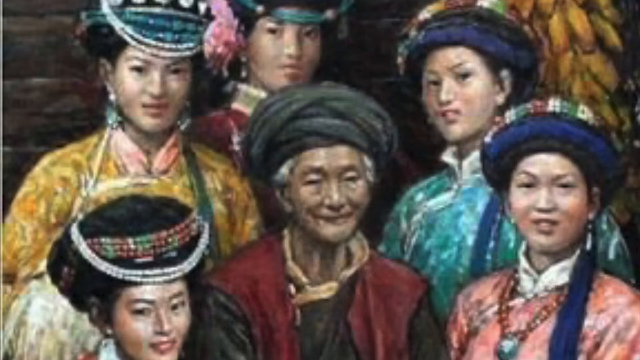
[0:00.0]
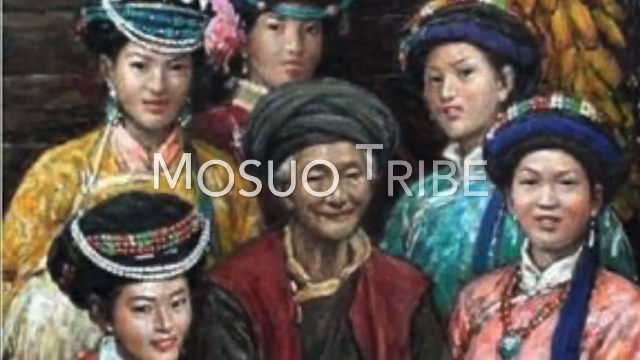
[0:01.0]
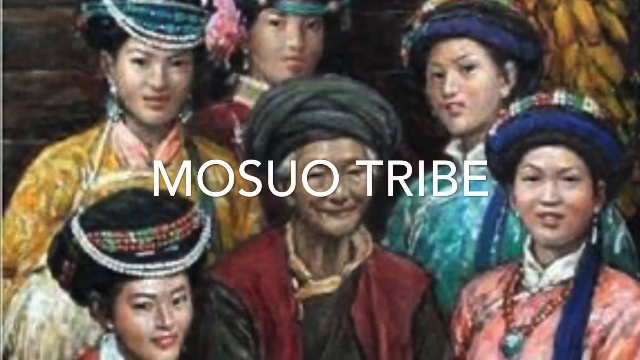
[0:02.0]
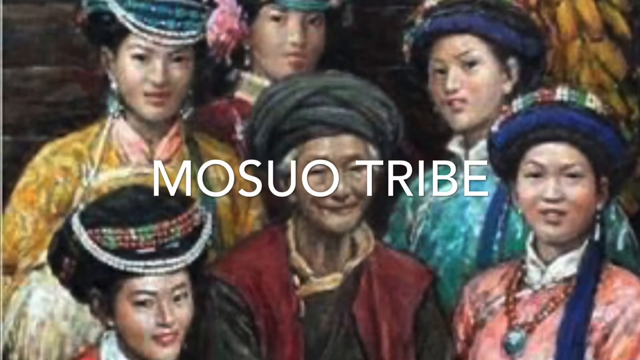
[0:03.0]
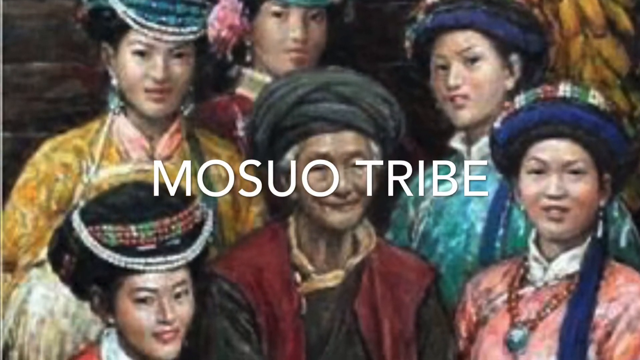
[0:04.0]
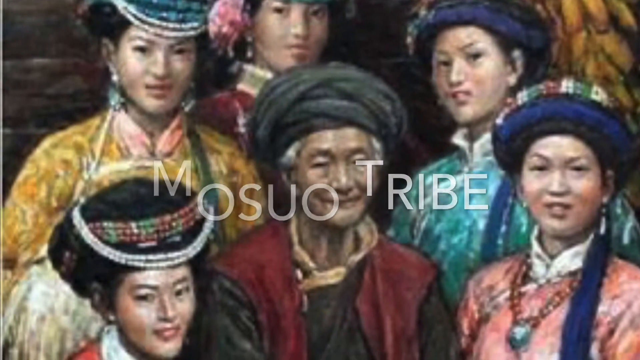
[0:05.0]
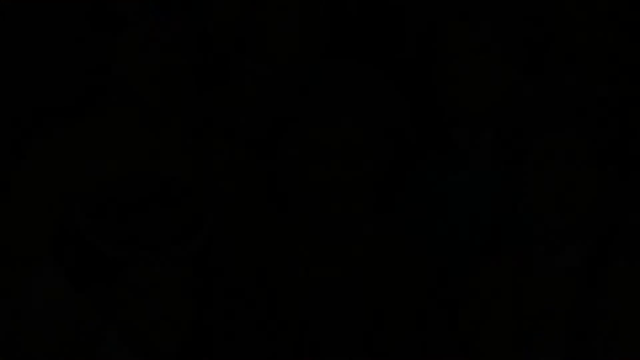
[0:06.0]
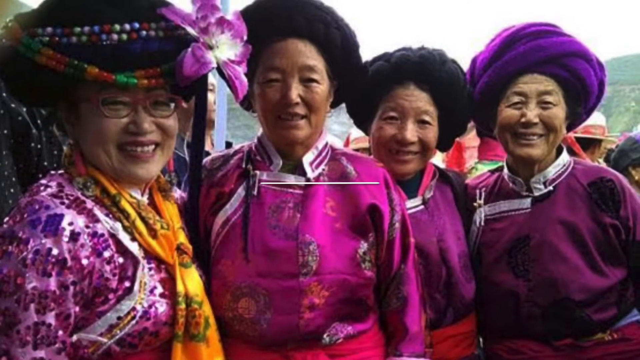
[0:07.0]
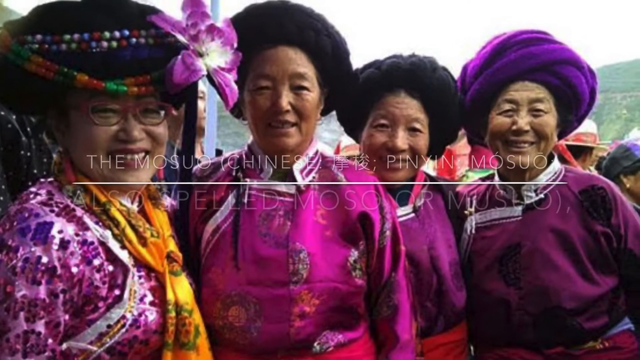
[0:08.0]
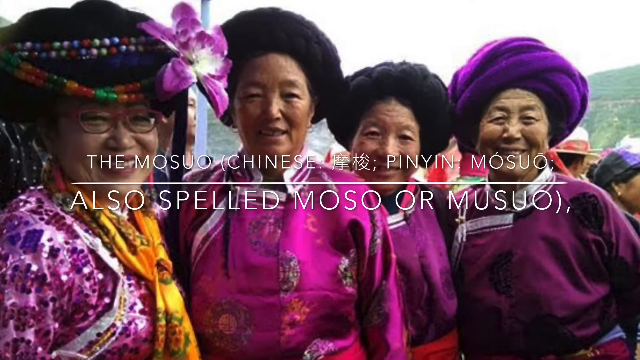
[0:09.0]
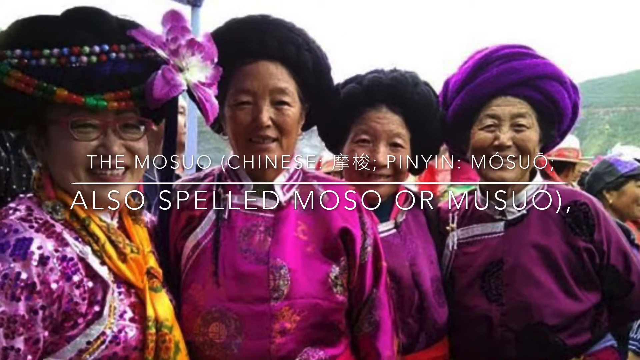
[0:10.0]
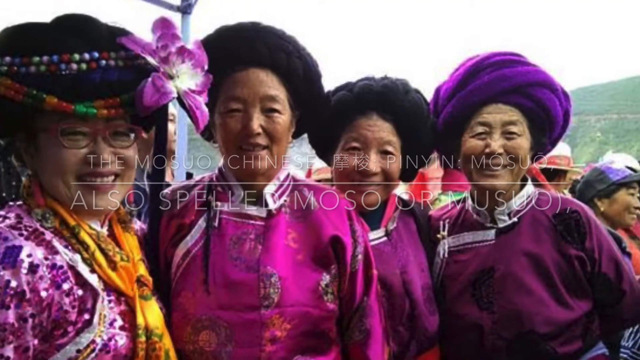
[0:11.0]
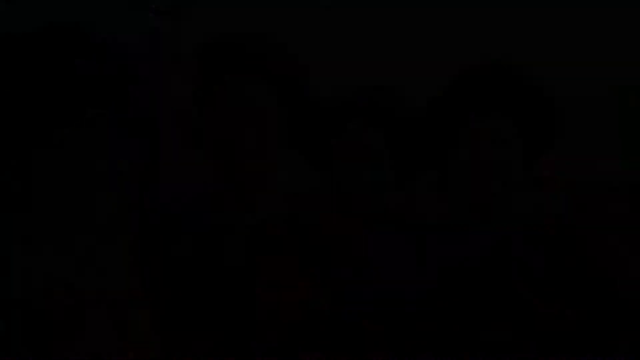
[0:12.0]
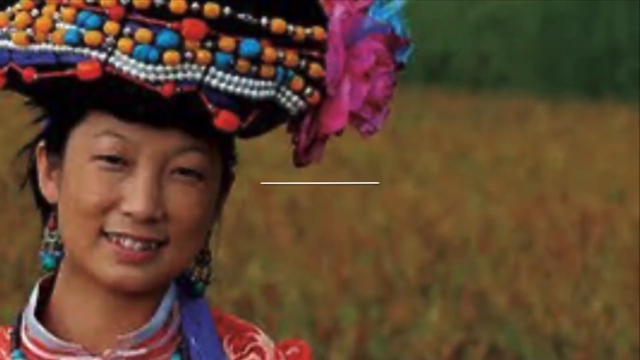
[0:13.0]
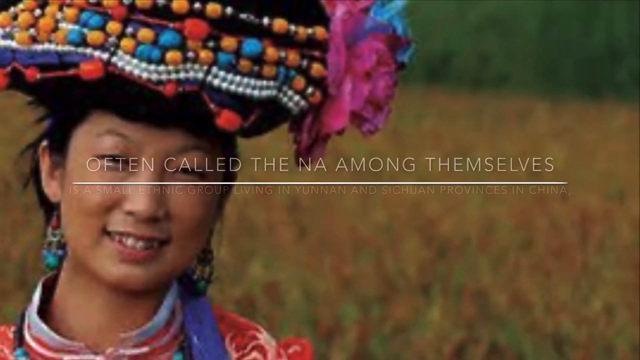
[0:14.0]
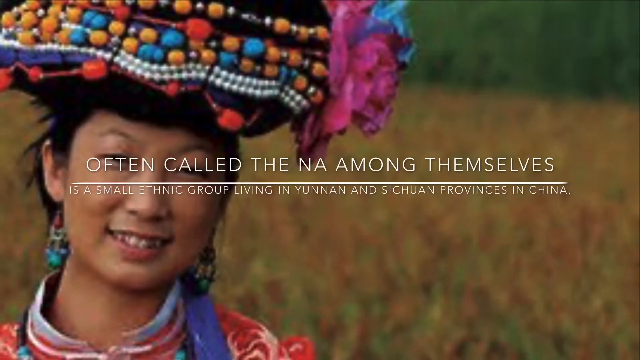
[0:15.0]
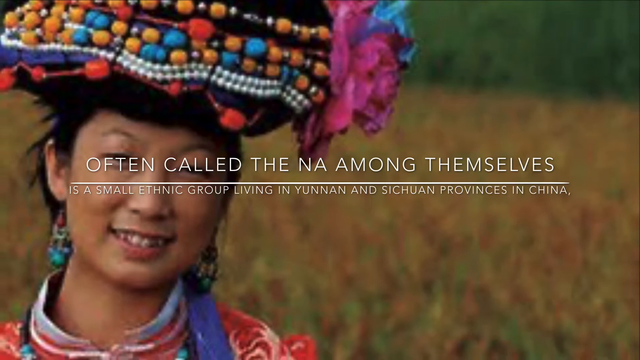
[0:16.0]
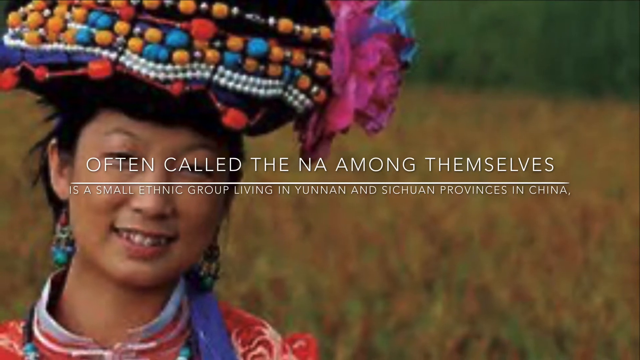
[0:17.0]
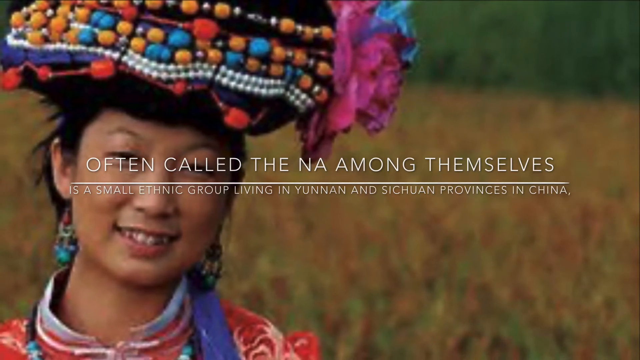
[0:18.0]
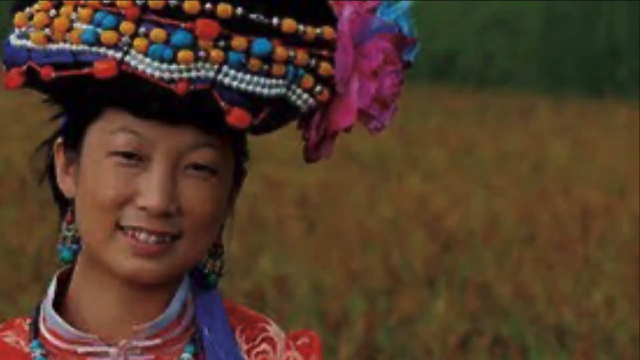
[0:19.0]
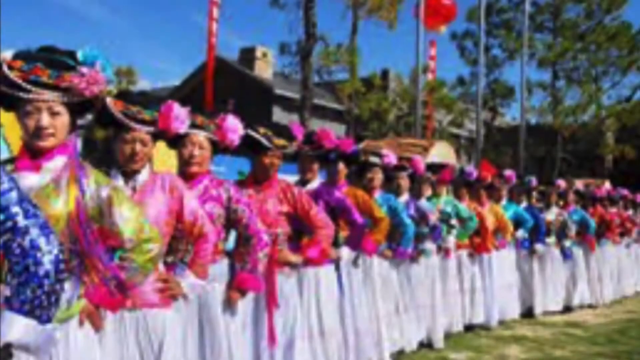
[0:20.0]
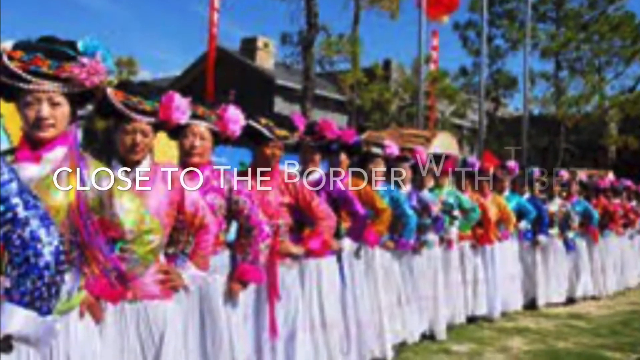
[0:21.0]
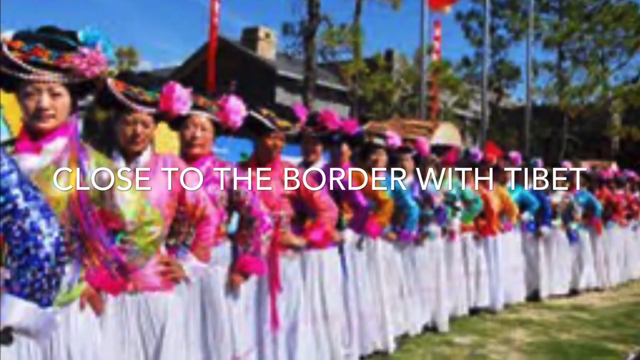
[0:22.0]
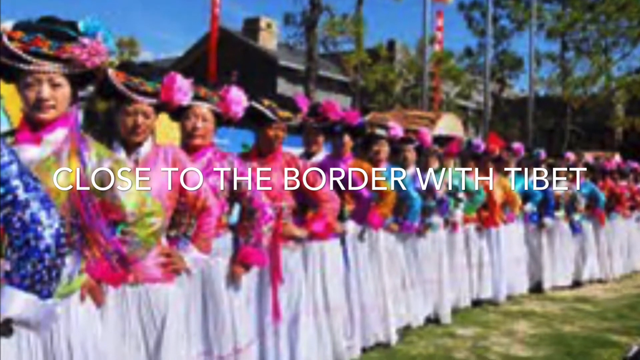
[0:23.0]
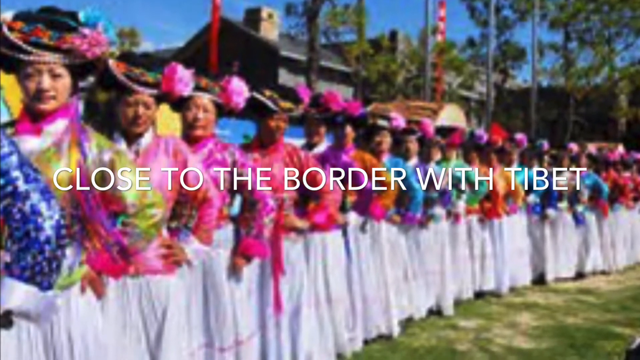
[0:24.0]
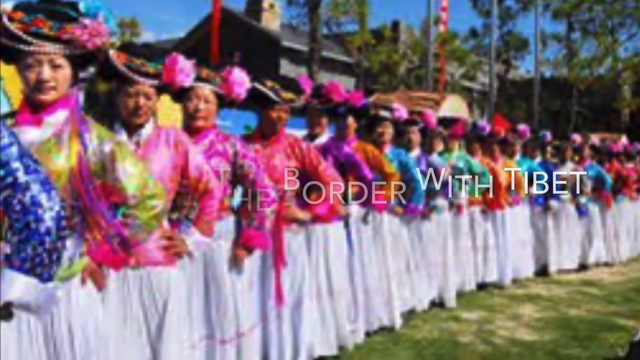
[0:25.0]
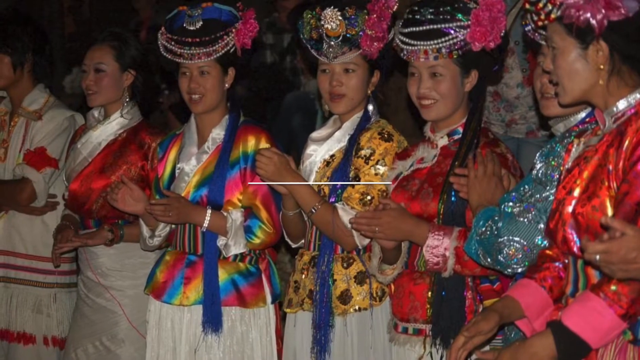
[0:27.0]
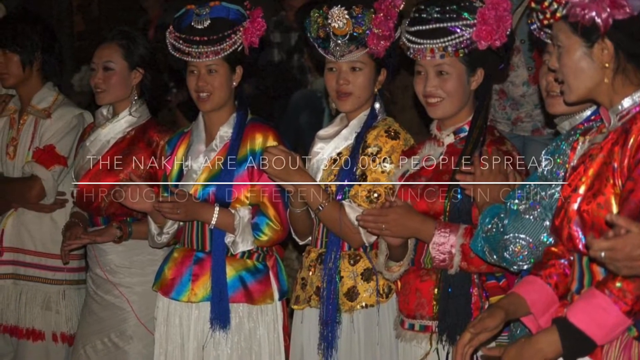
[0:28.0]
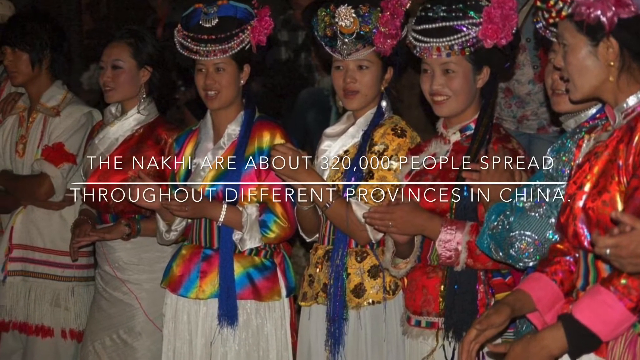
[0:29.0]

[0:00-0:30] The video introduces something called the Muso tribe. It opens on what looks like a painting of a group of people taking a picture with each other; they are all women, all wearing turban-type head coverings or hats, and they appear to be Chinese. Text pops up as the video moves to a second picture, naming "the Muso" with a Chinese pinyin form and noting that it is also spelled M-U-S-U-O. This picture shows four women wearing turbans, which are big, sort of circular hats. More text then appears reading "often called the Na among themselves," and at the bottom, "is a small ethnic group living in Yunnan and Sichuan provinces in China," as another picture shows a lady off to the left.